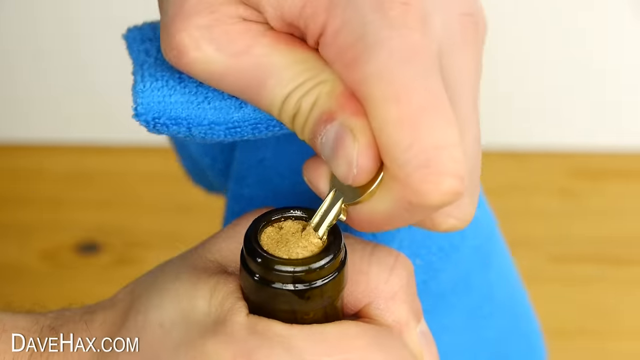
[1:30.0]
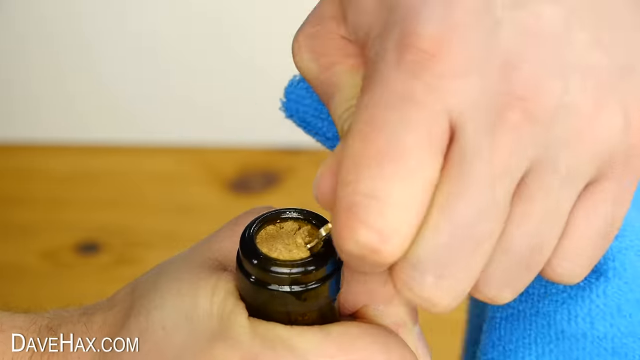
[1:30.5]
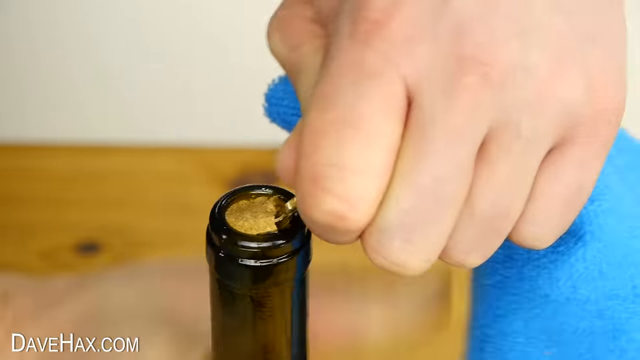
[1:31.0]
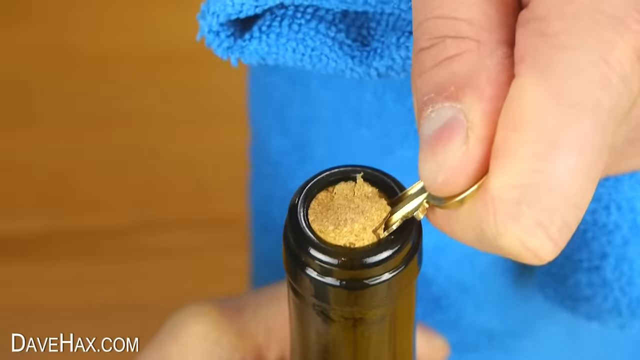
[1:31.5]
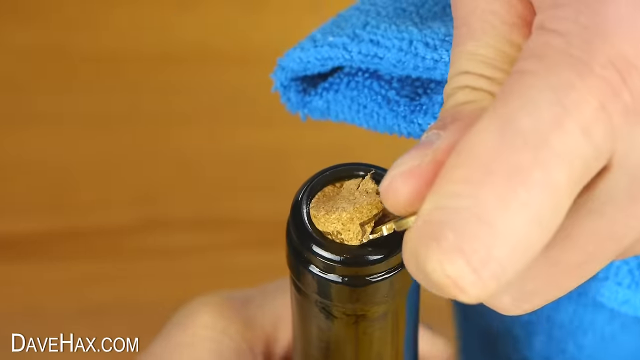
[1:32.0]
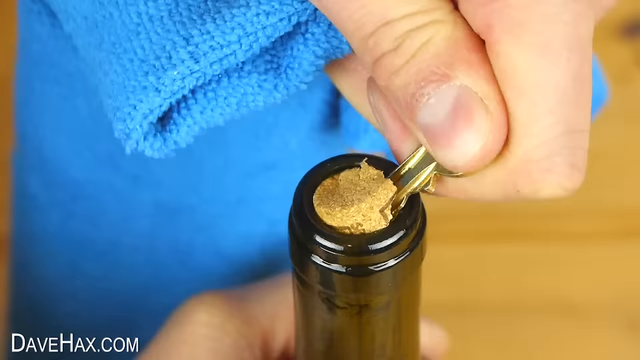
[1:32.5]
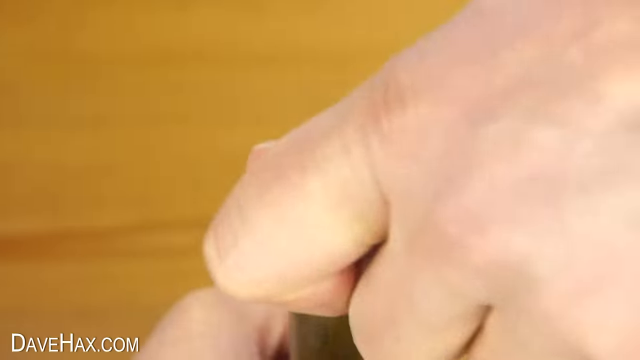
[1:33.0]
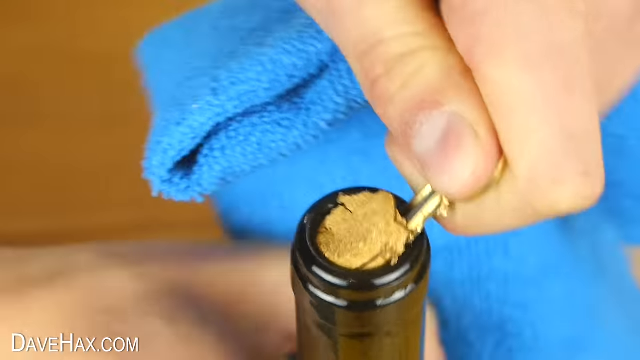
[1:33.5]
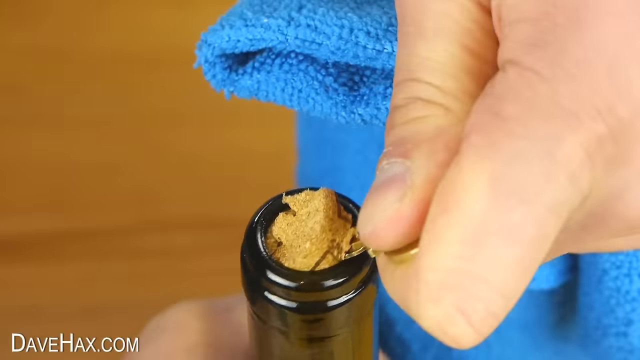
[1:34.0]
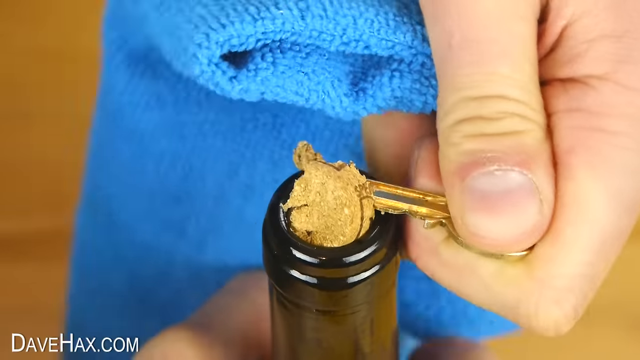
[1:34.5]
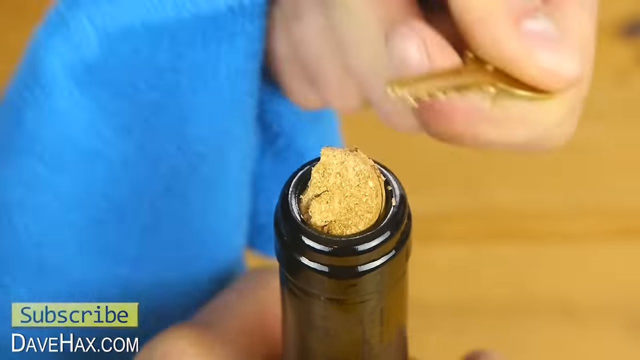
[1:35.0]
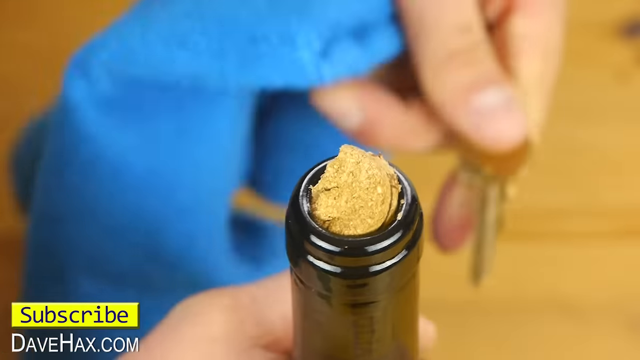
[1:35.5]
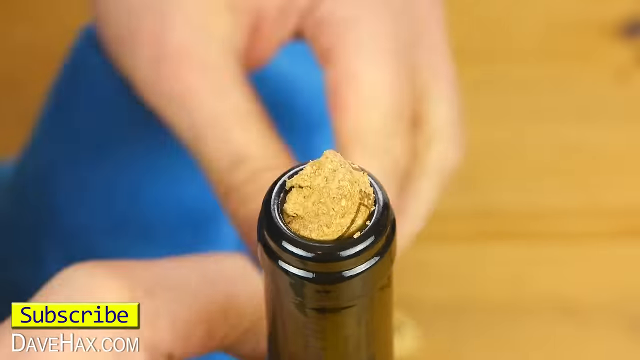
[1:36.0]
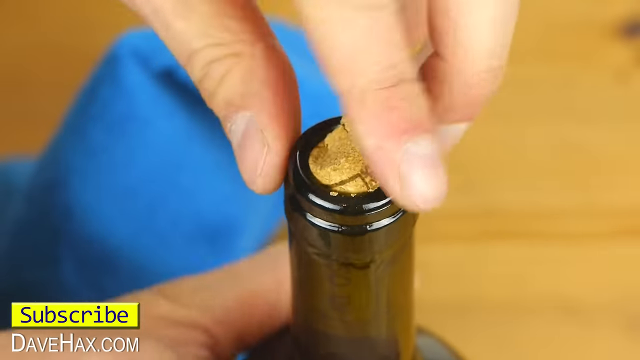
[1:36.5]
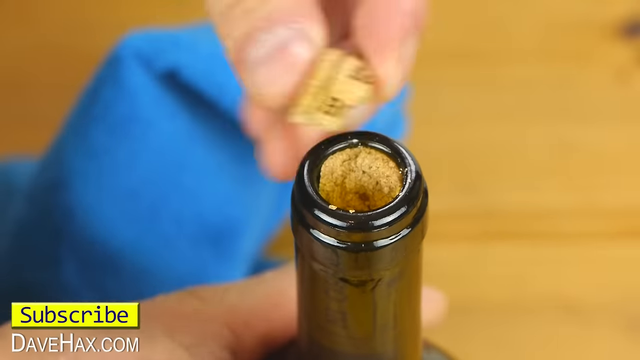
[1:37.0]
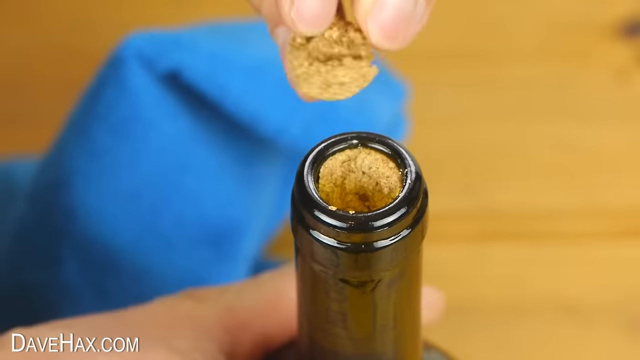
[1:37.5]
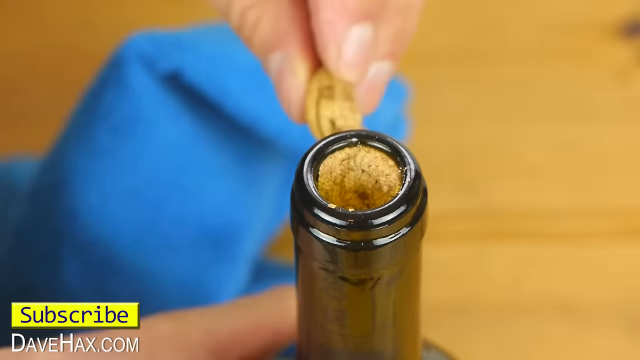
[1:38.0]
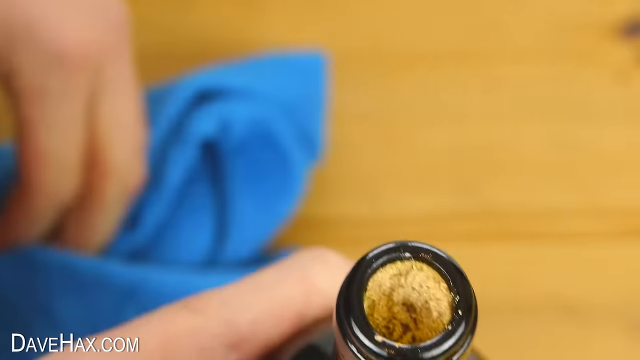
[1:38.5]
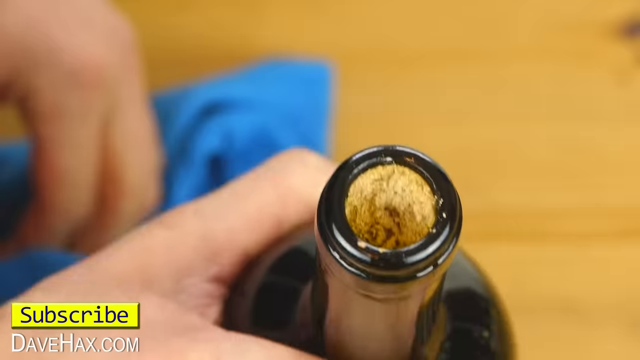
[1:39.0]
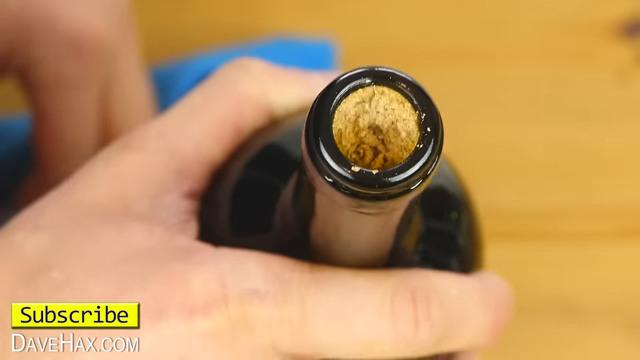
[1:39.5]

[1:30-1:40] The man uses the small brass key as a tool to get pieces of a broken cork out of the bottle, holding the blue washcloth. A yellow subscribe square flashes in the lower left of the screen. Another piece of the cork breaks off. He seems to be left-handed. He gets a good chunk out, but more of the cork remains stuck in the bottle.